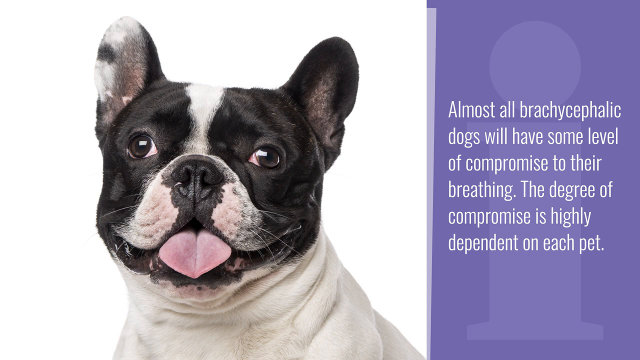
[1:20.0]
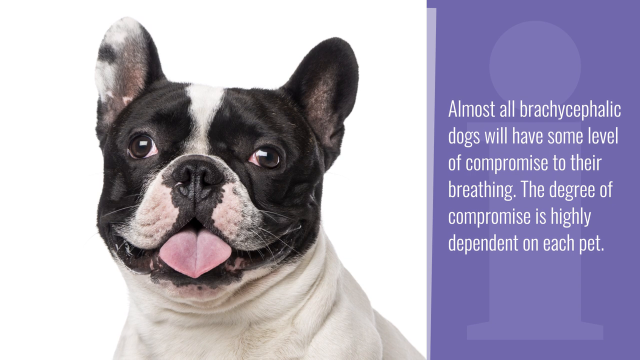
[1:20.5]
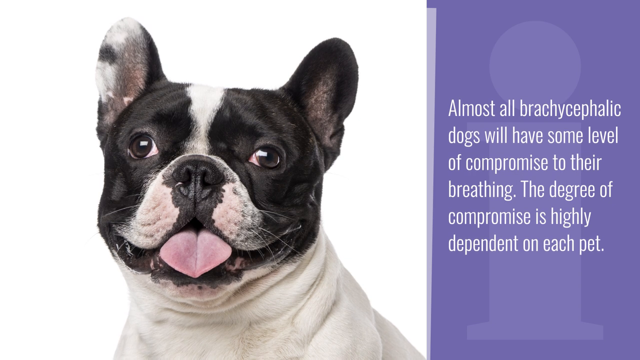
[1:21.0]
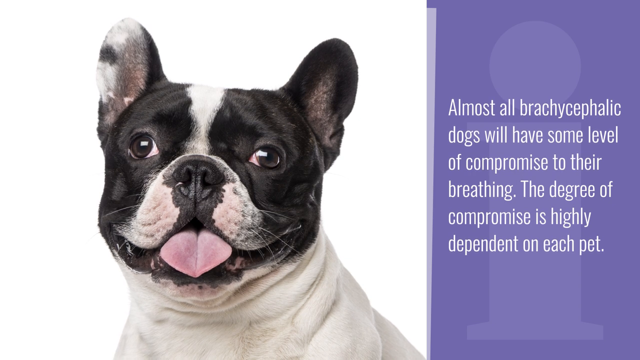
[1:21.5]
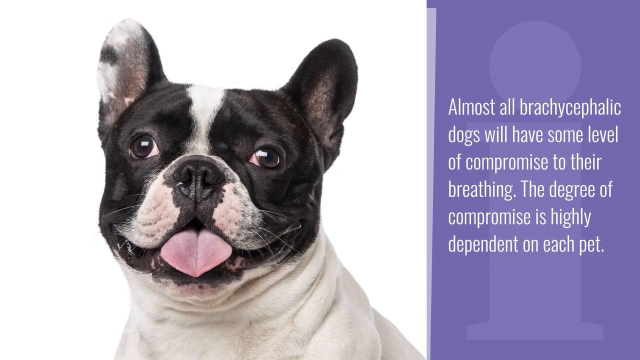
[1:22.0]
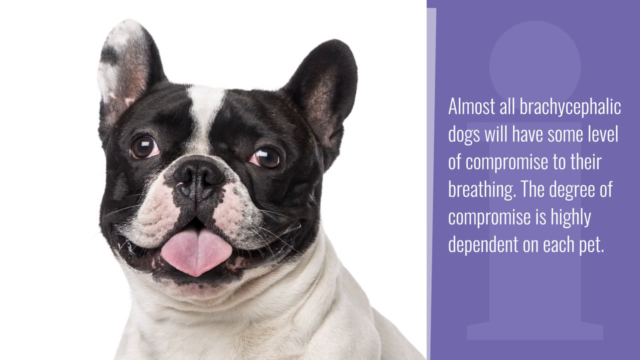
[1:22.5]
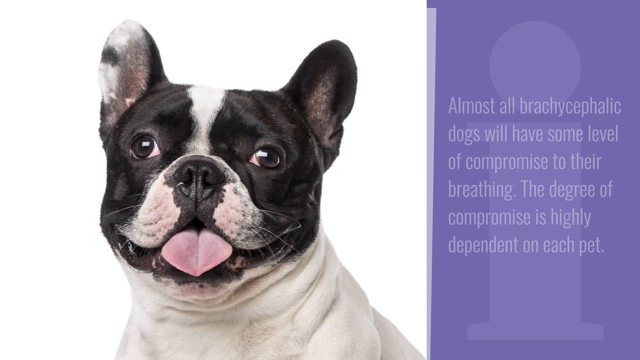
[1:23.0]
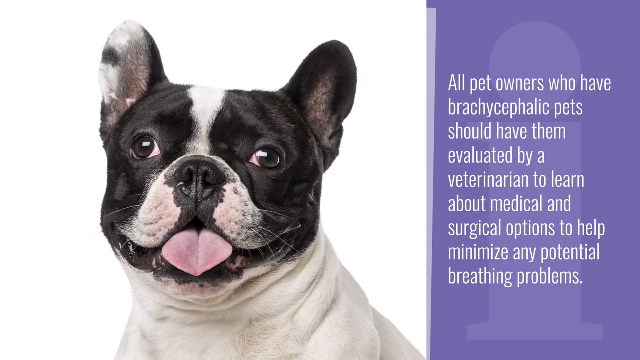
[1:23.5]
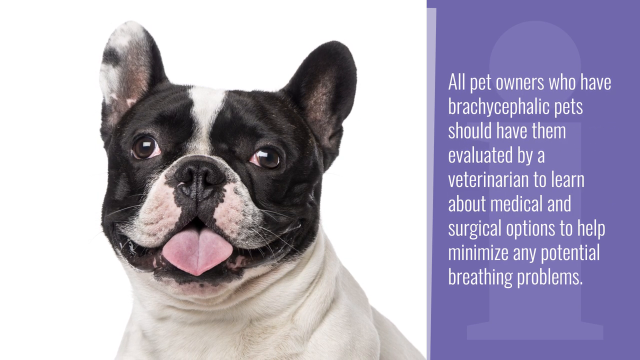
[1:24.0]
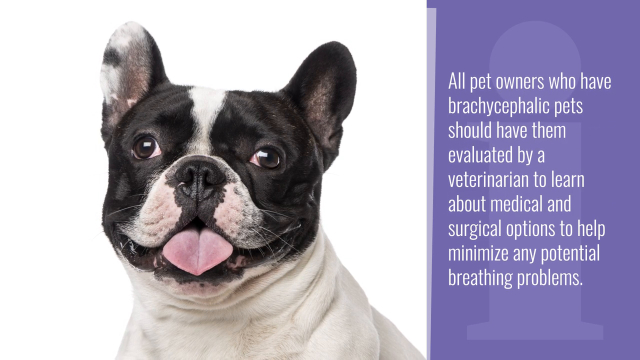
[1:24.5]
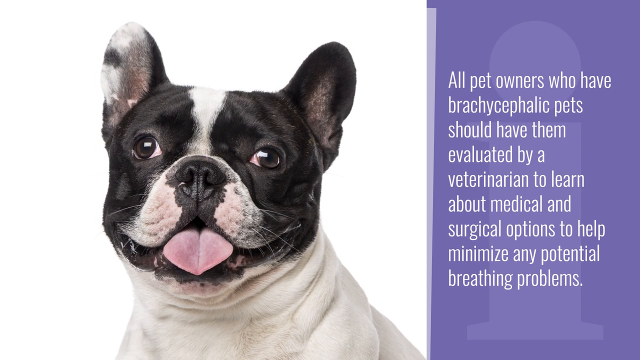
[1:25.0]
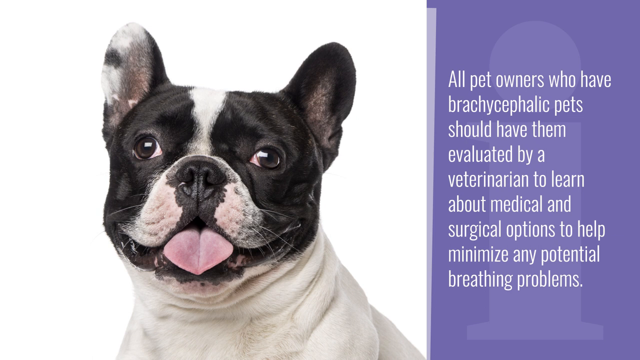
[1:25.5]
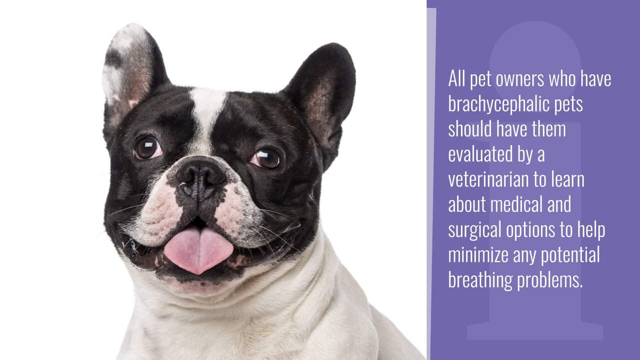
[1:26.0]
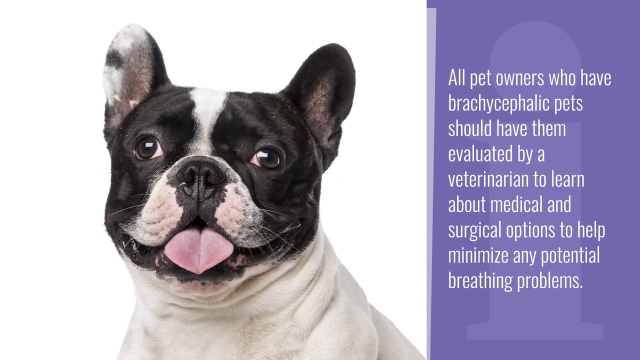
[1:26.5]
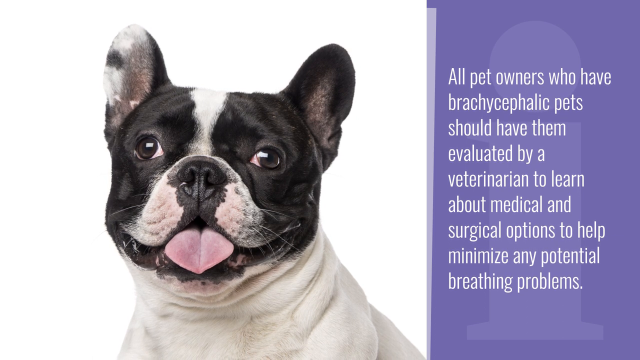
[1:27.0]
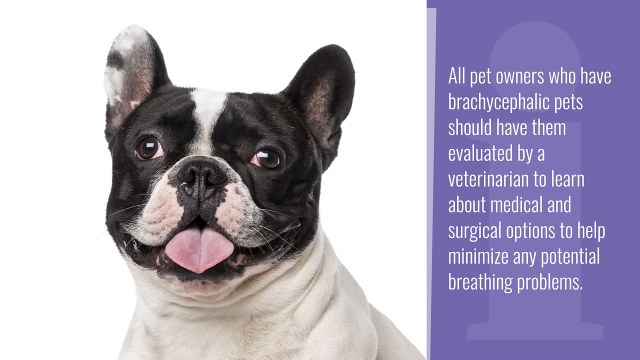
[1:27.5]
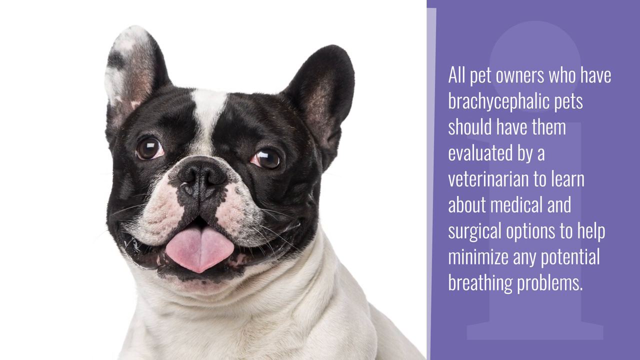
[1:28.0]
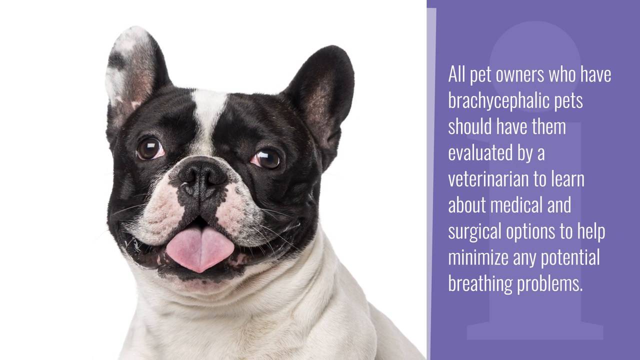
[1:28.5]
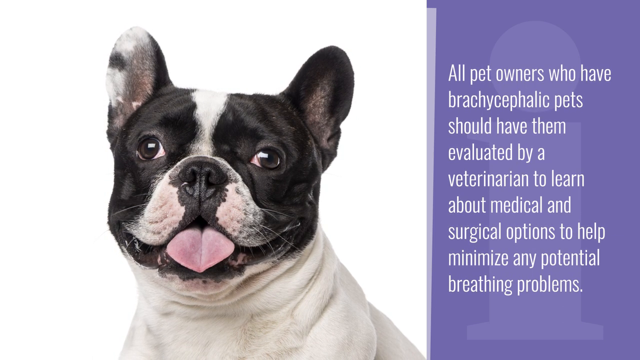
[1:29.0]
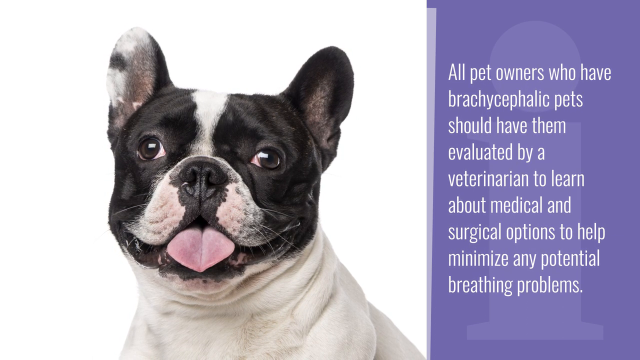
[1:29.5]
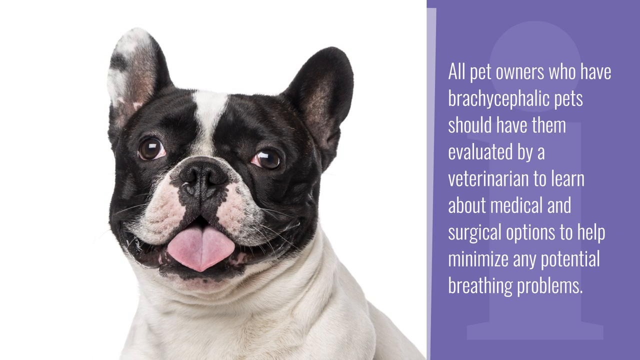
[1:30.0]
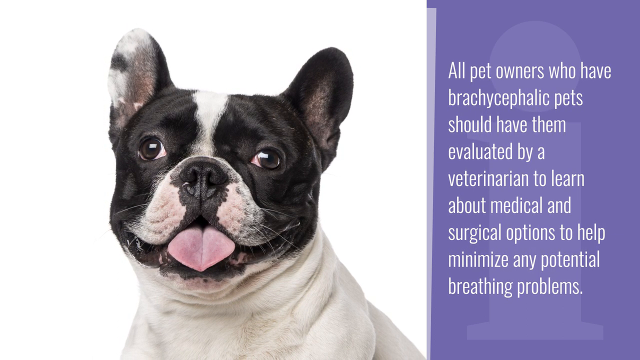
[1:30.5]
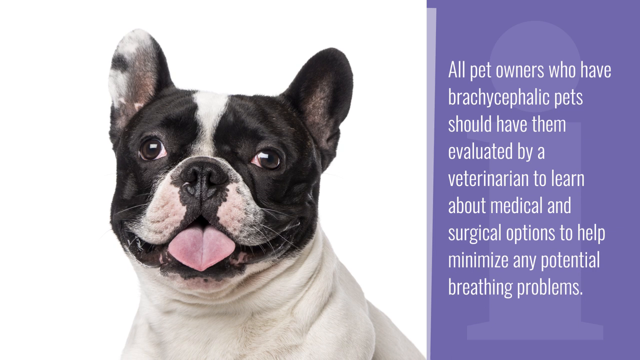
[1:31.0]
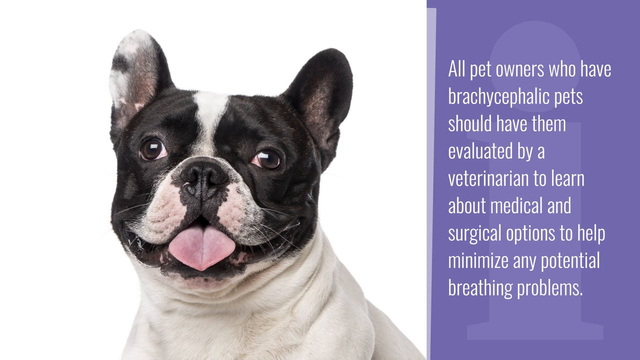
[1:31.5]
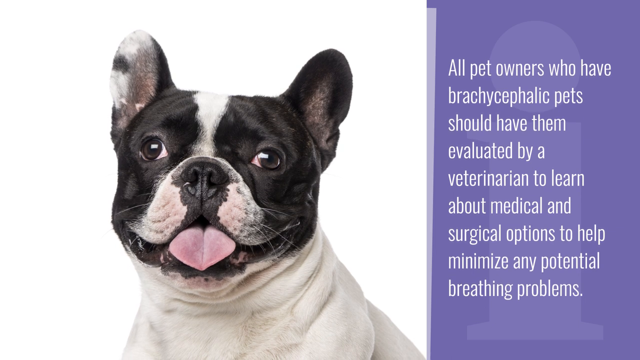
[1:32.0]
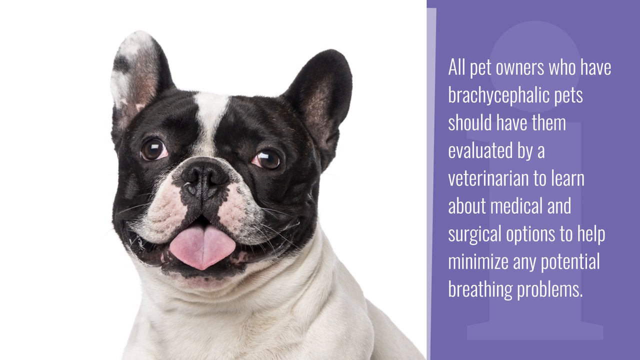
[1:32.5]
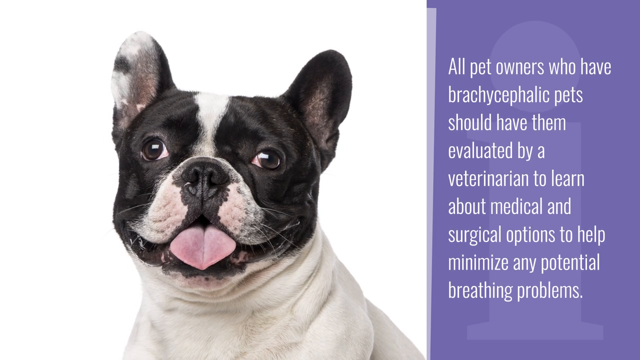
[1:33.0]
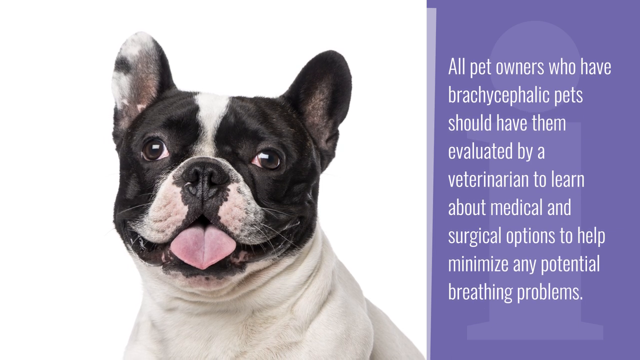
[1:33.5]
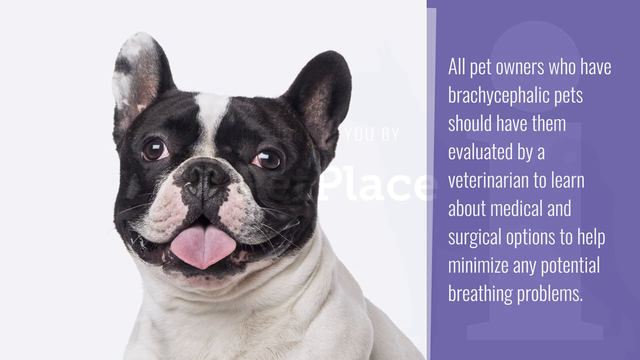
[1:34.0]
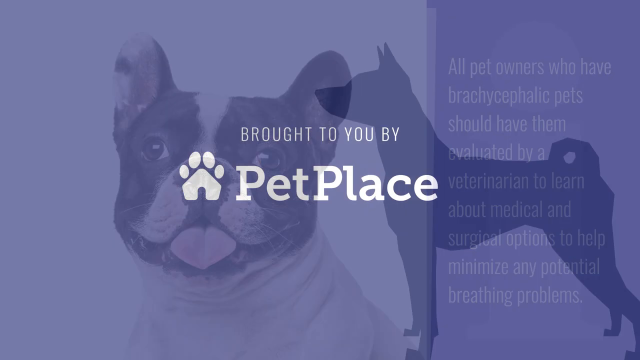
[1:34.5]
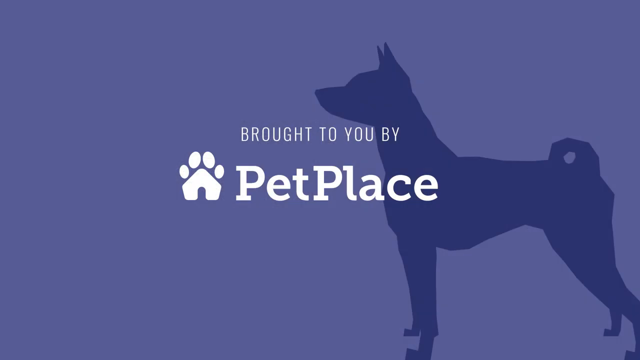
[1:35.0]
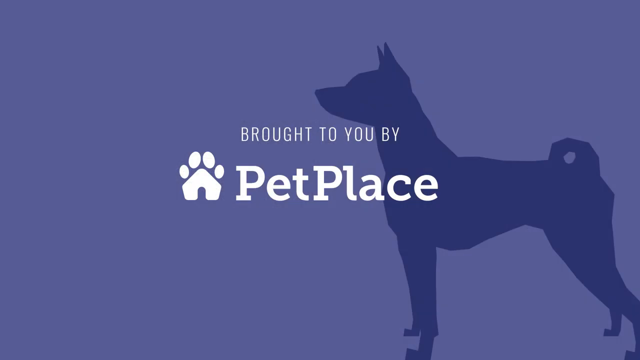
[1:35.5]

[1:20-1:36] The photo of the bulldog stays on the left side of the screen against the white background, unchanged: a bulldog with a white body and lots of wrinkles. On the purple background, the white text changes to "All pet owners who have brachycephalic pets should have them evaluated by a veterinarian to learn about medical and surgical options to help minimize any breathing problems." Then the entire screen changes to a light purple background with a darker purple silhouette of a dog and white text in the center reading "Brought to you by Pet Place," with "Pet Place" in a larger, bolder white font. Next to "Pet Place" is a logo that looks like the basic outline of a house with four dog toe prints above it.